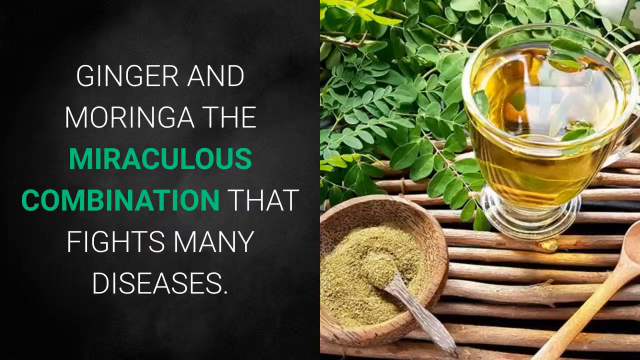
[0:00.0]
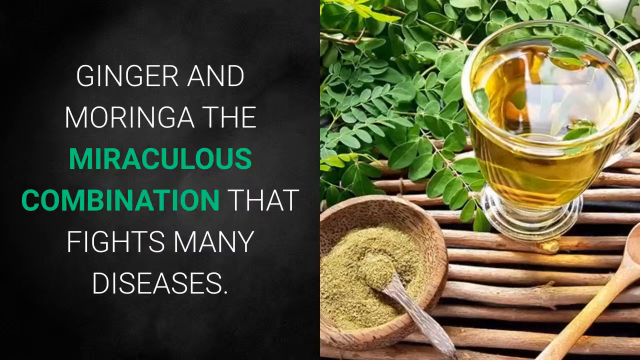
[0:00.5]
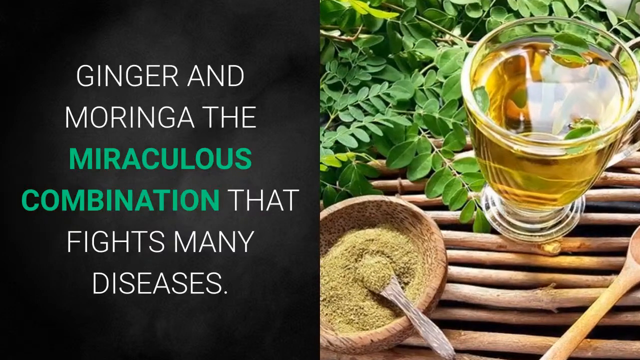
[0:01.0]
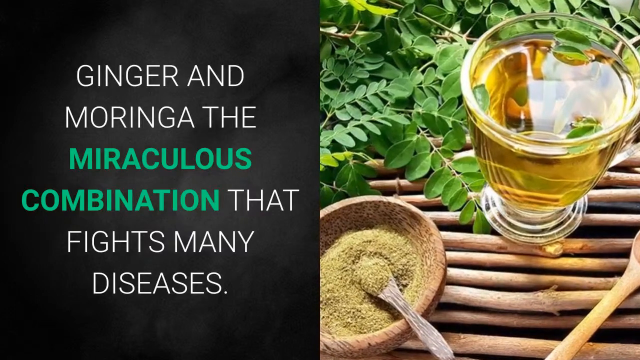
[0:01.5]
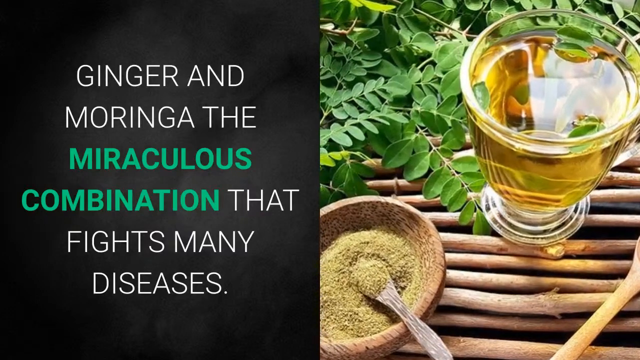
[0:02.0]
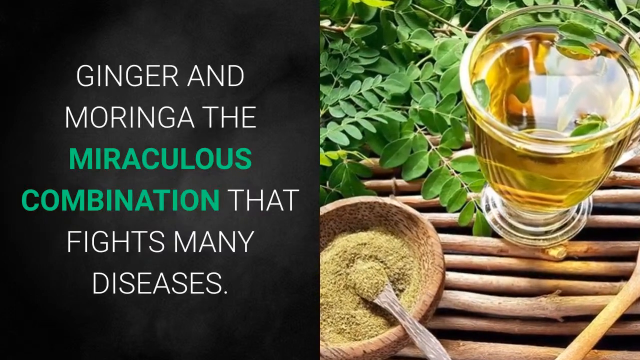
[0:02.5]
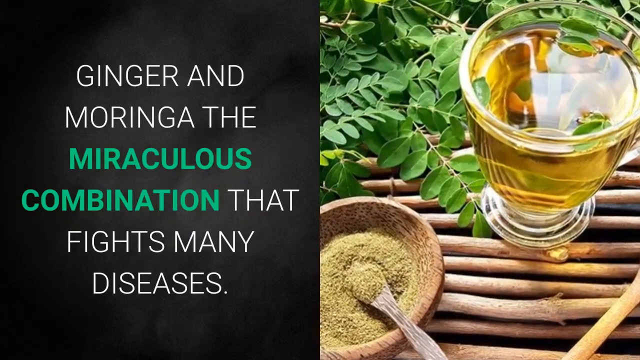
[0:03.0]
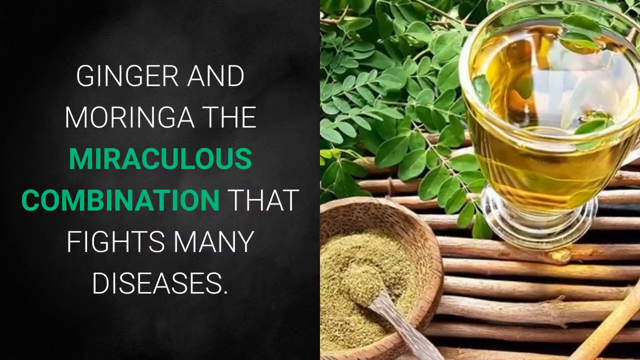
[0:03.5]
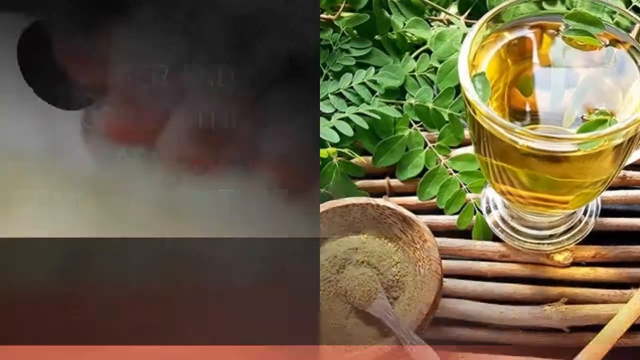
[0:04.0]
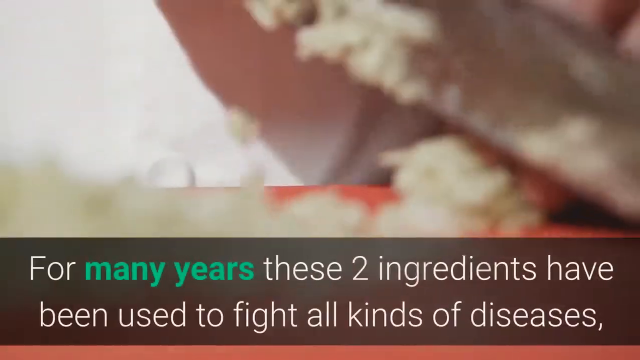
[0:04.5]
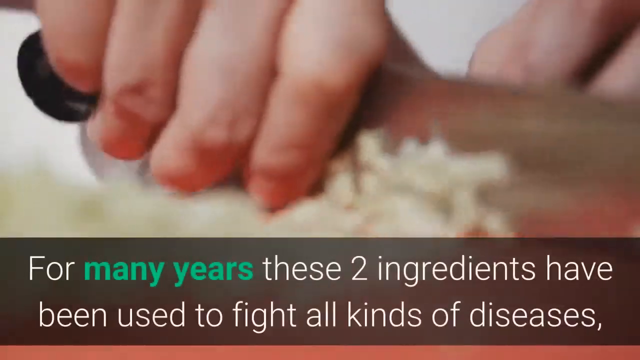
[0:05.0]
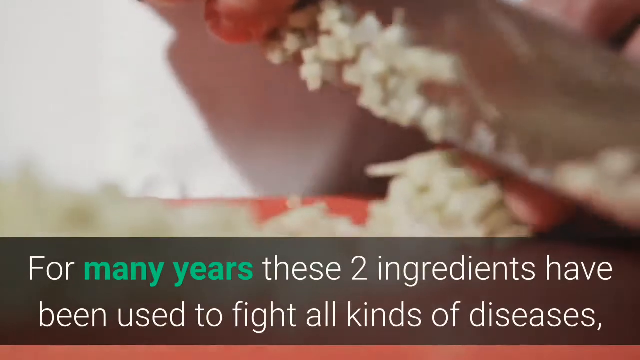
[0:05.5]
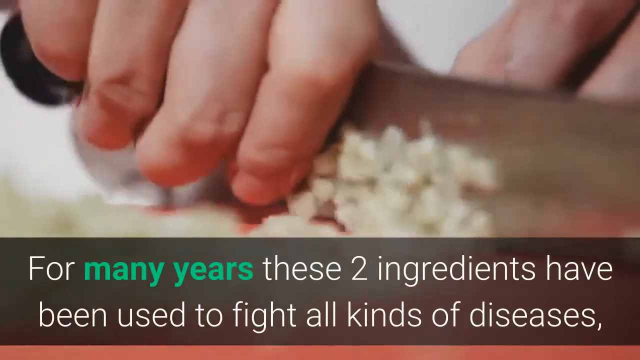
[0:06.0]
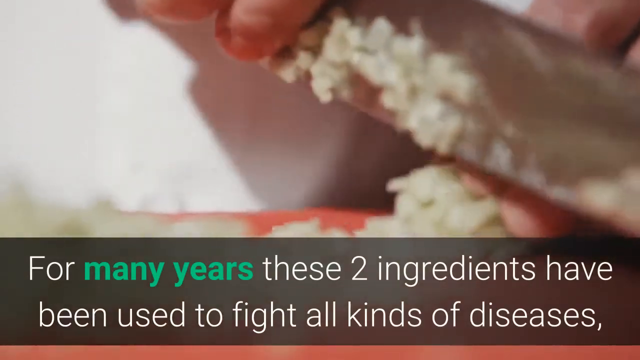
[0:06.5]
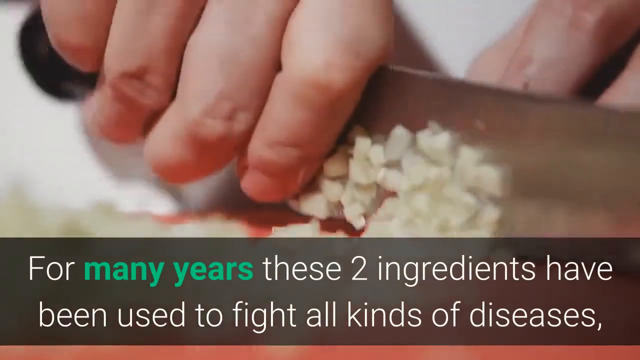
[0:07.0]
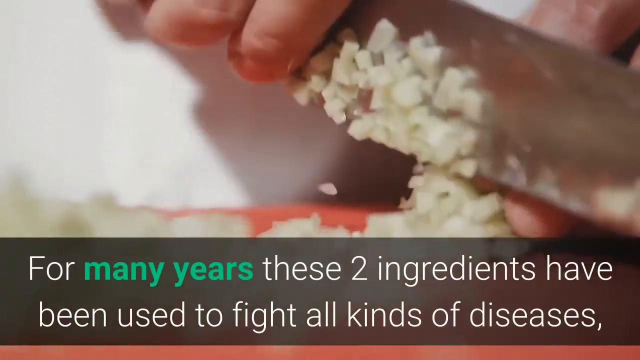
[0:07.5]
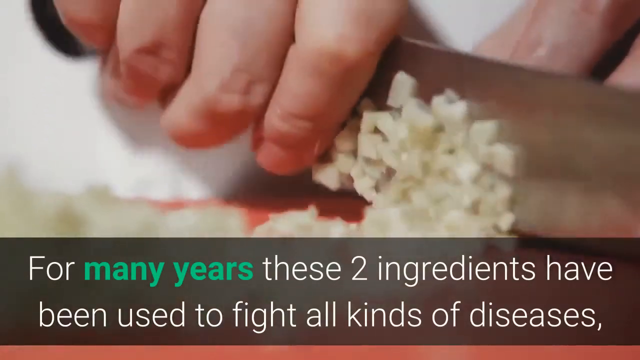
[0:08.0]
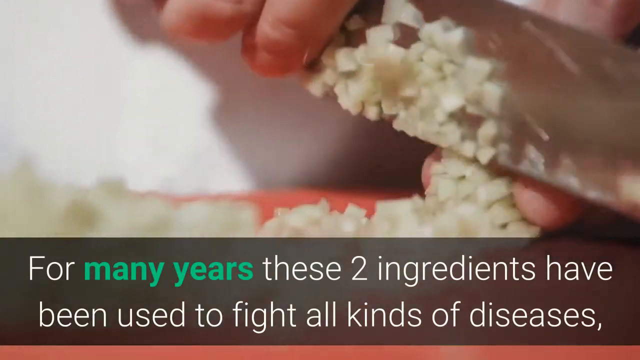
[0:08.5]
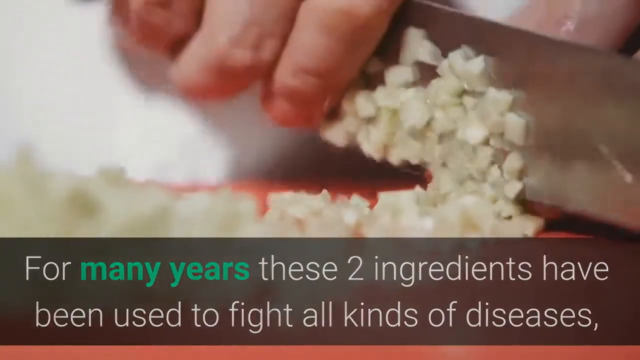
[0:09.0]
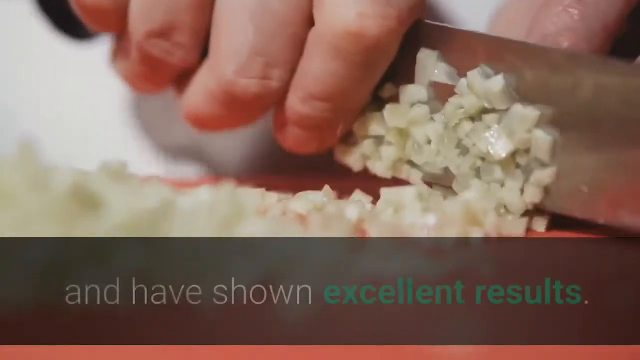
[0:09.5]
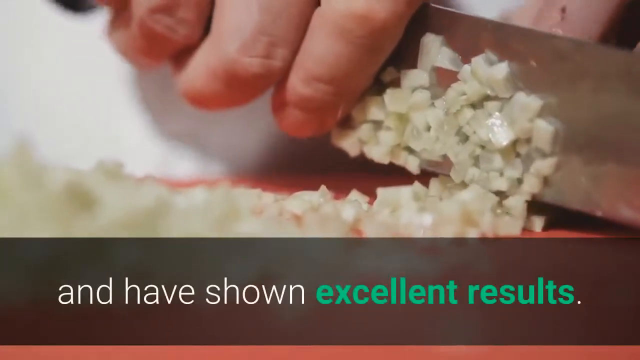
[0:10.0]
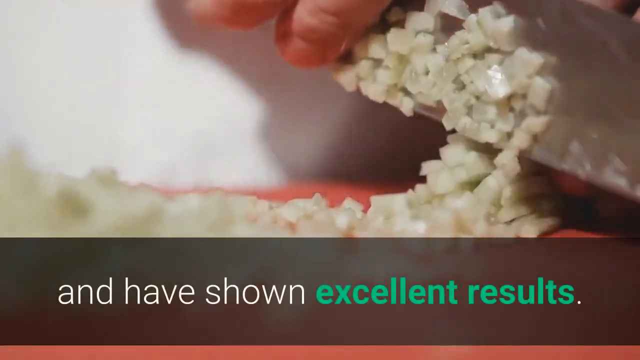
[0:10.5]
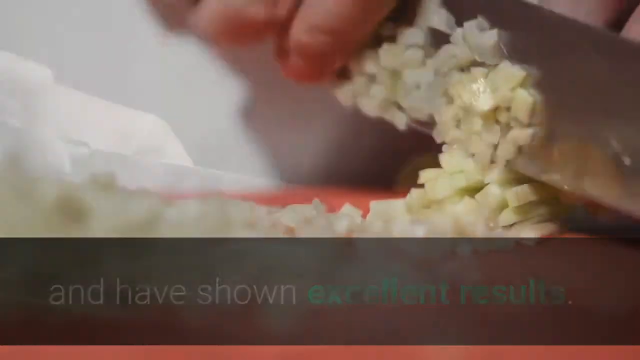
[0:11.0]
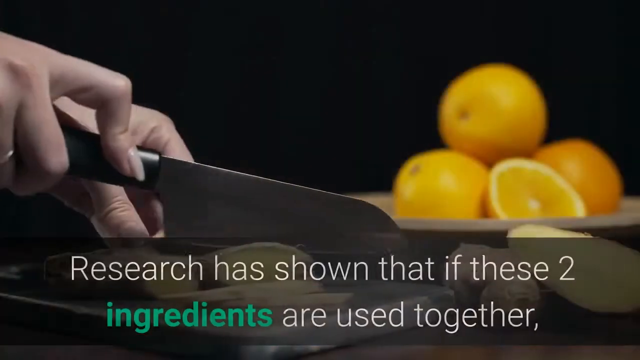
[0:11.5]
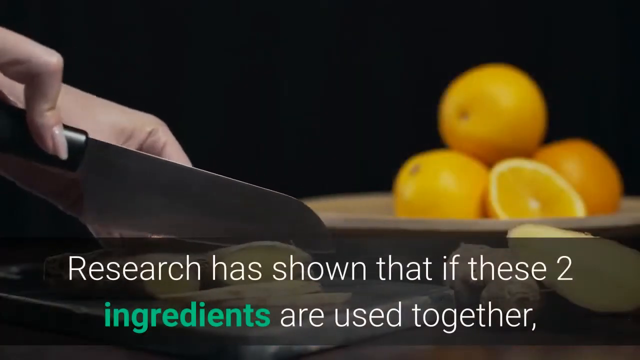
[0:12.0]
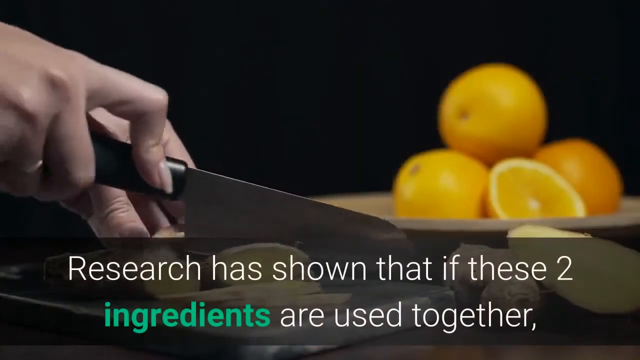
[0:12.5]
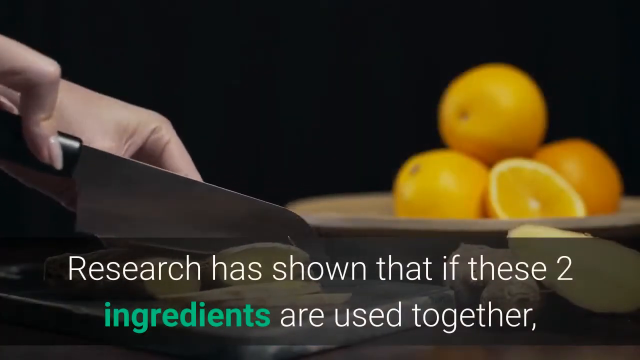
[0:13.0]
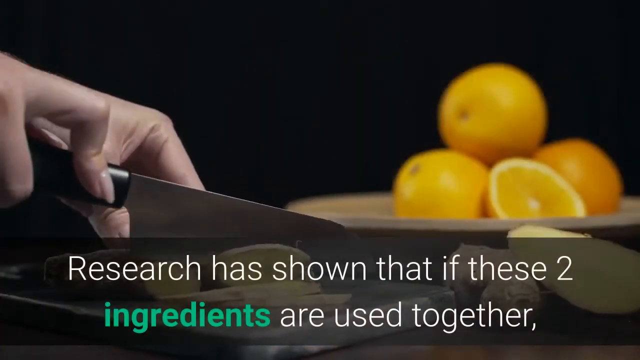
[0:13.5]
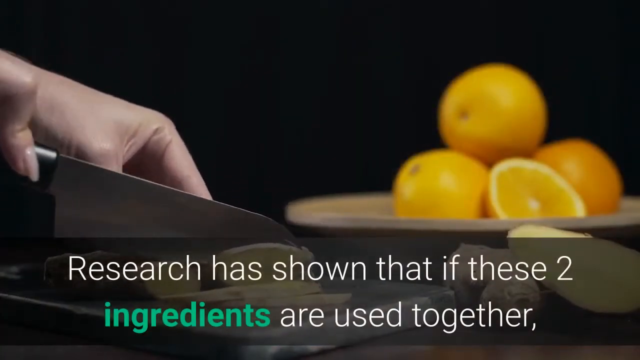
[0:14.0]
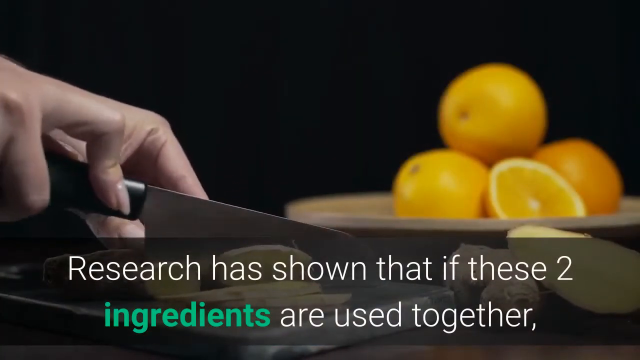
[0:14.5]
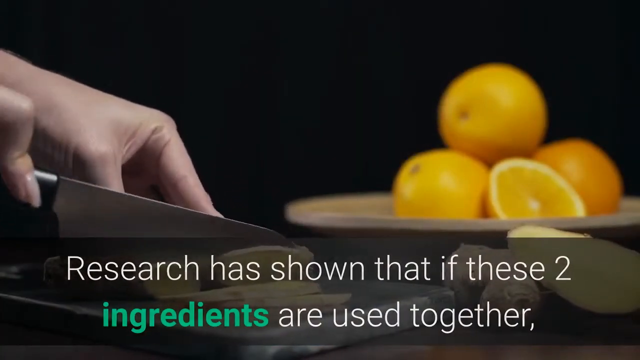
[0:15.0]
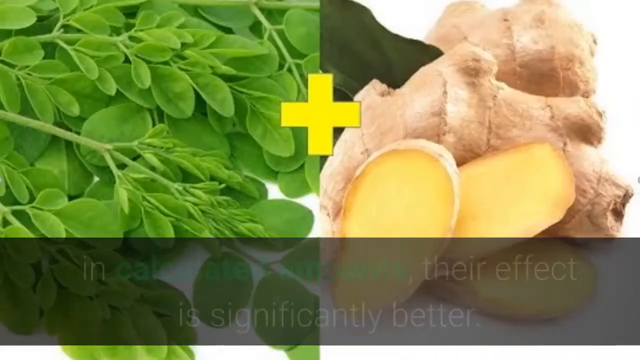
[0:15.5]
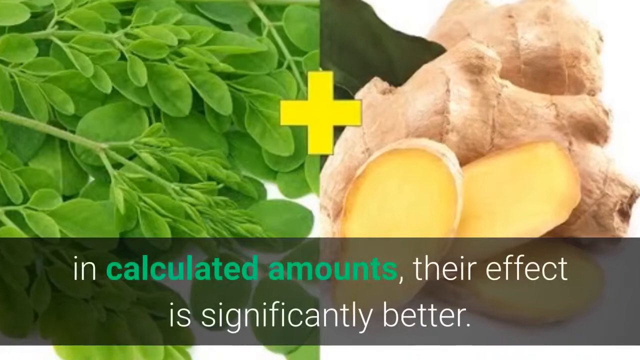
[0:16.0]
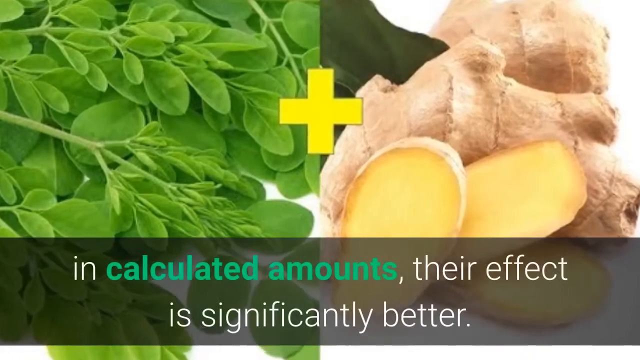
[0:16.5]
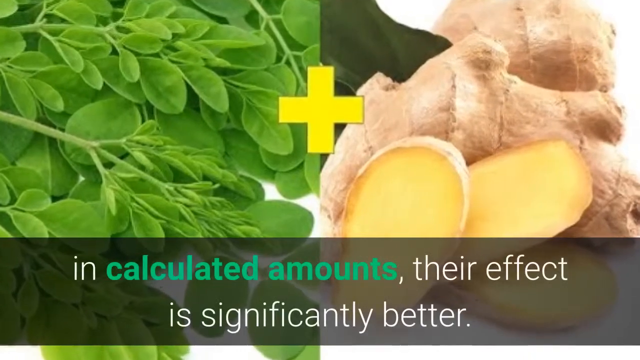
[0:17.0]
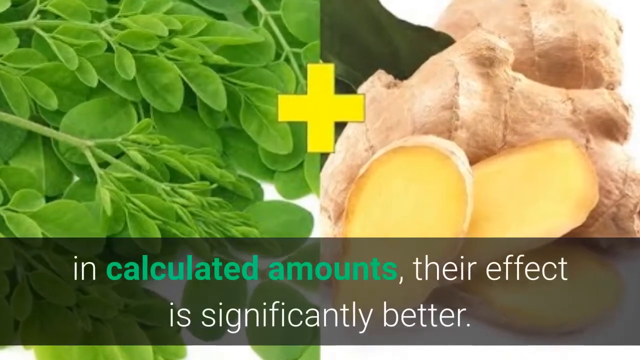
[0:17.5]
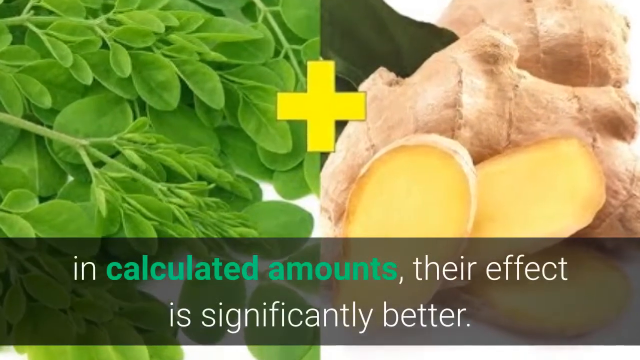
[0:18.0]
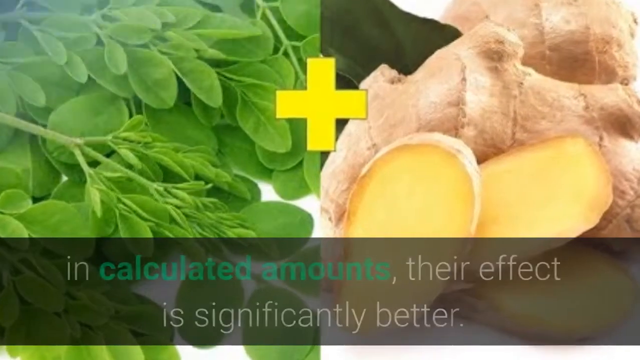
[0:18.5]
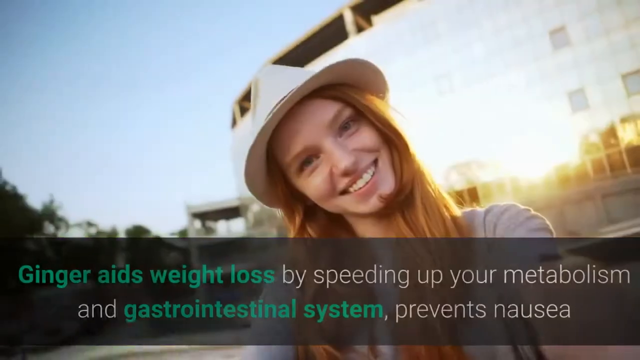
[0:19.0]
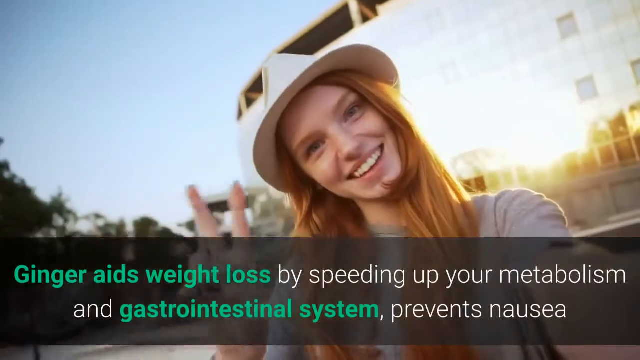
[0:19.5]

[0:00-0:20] On-screen text says "ginger and moringa has a miraculous combination. For many years, these two ingredients have been used to fight all kinds of diseases and have shown excellent results. Our research has shown that if these two ingredients are used together, then in calculated amounts, their effects are significantly better." The text also says the two ingredients, used in combination, can fight many different types of diseases. In a kitchen, a group of cooks uses a knife to cut the ingredients into smaller pieces.